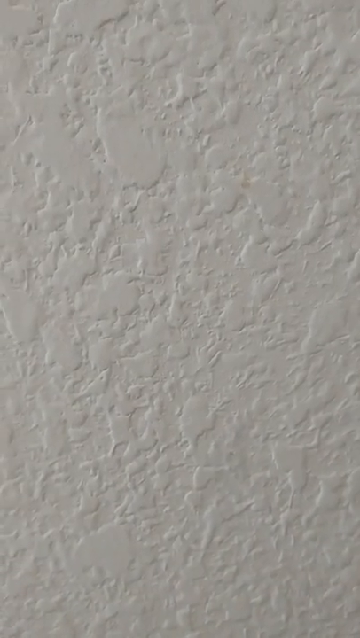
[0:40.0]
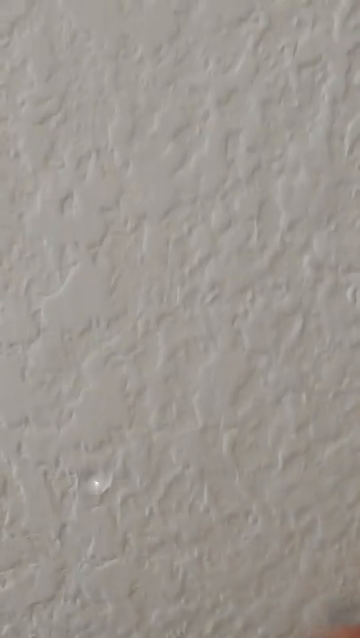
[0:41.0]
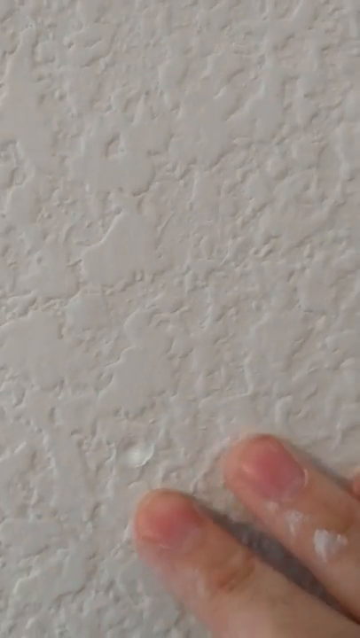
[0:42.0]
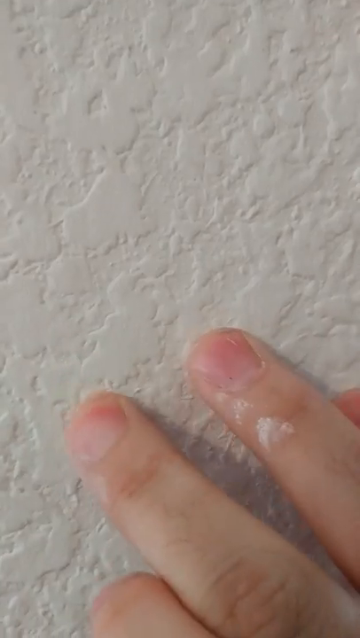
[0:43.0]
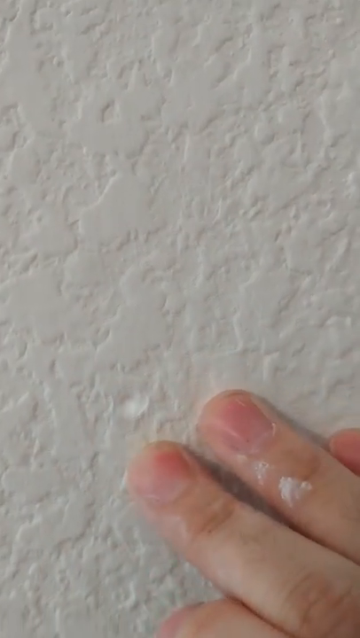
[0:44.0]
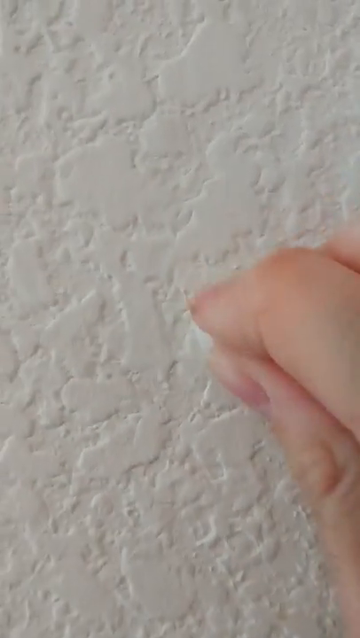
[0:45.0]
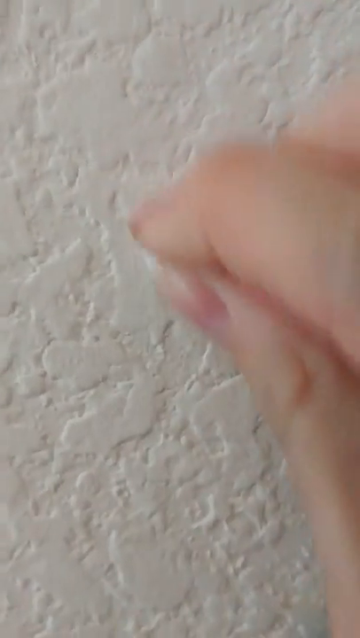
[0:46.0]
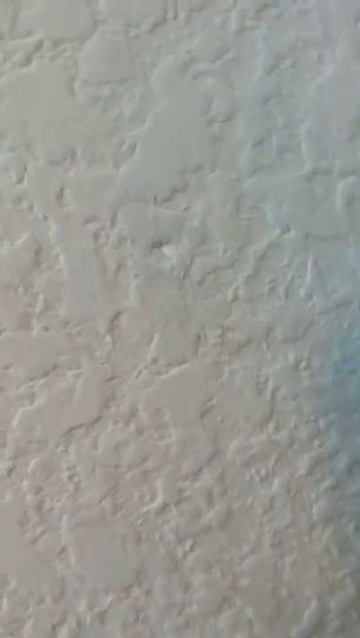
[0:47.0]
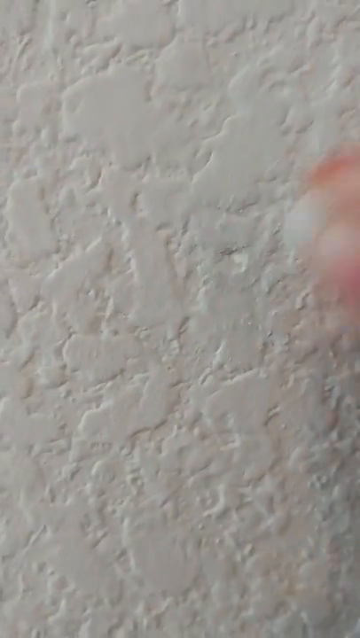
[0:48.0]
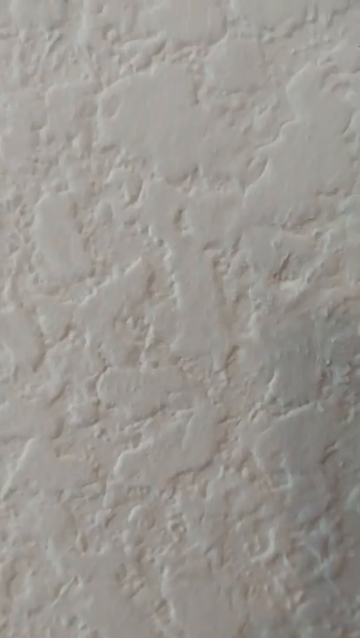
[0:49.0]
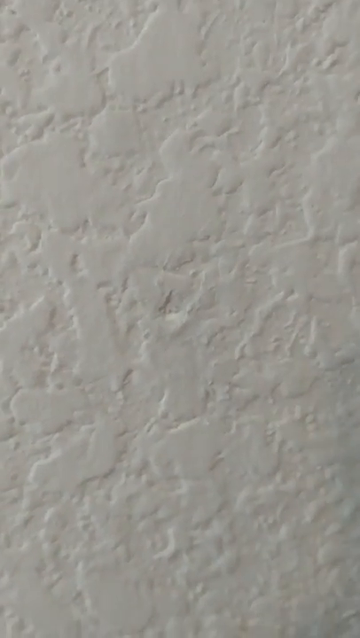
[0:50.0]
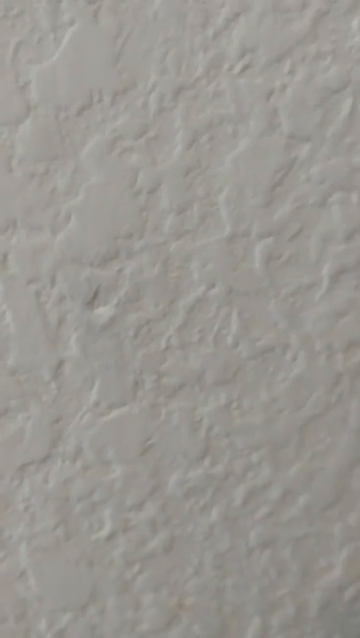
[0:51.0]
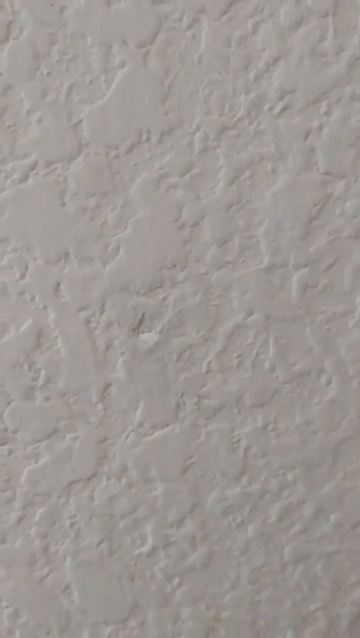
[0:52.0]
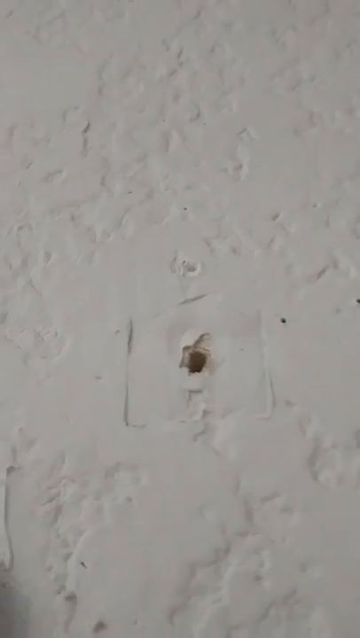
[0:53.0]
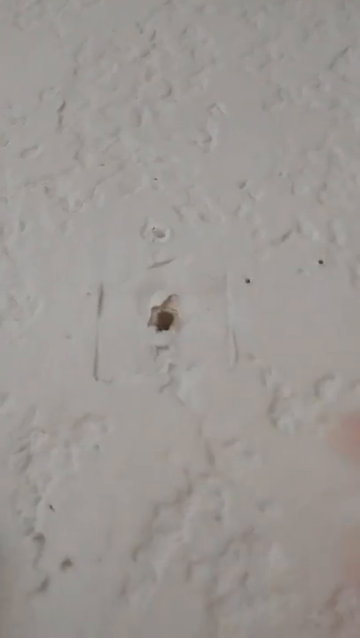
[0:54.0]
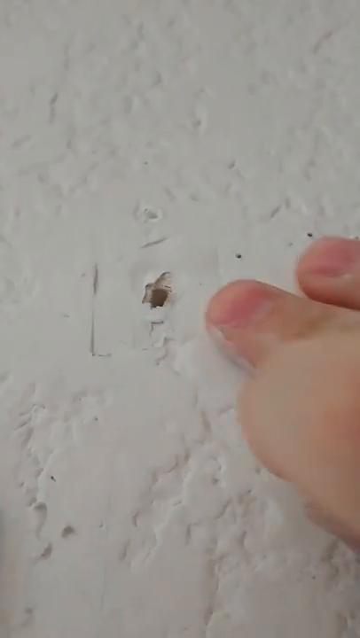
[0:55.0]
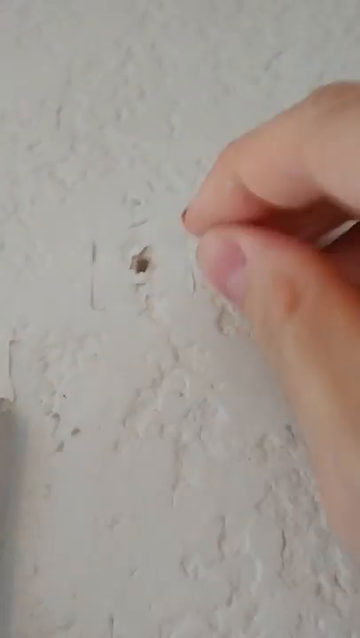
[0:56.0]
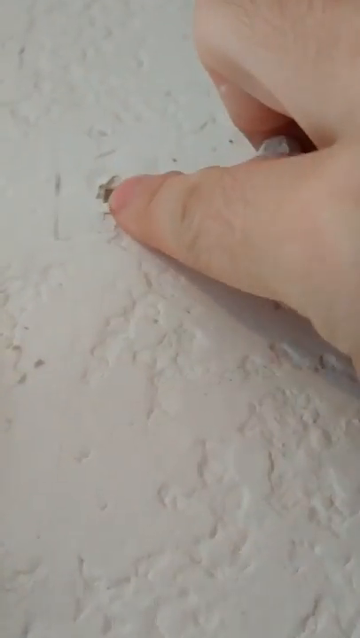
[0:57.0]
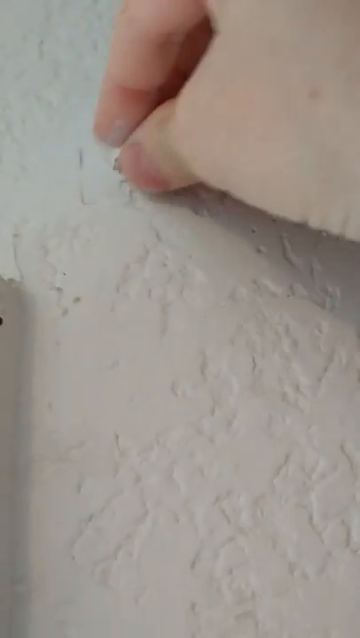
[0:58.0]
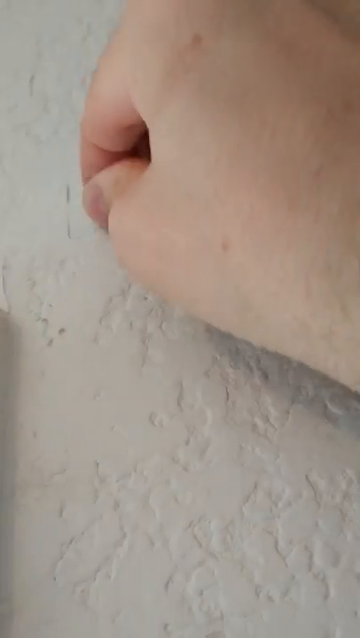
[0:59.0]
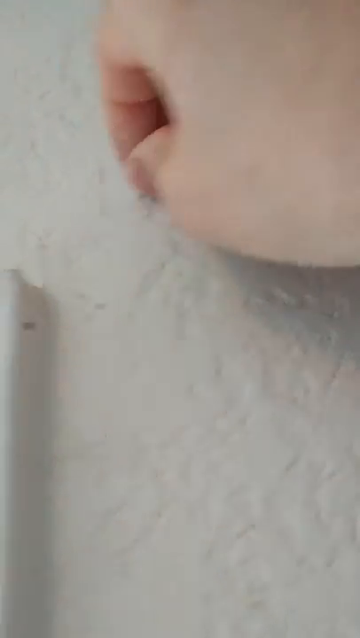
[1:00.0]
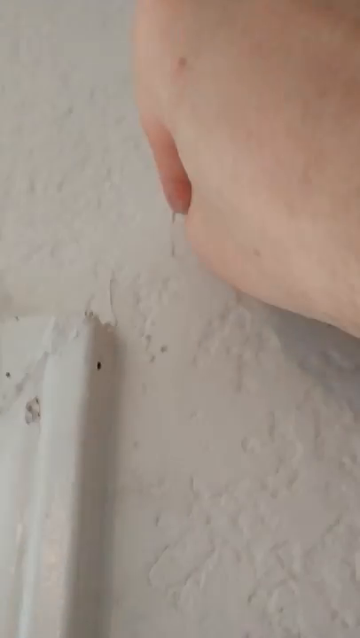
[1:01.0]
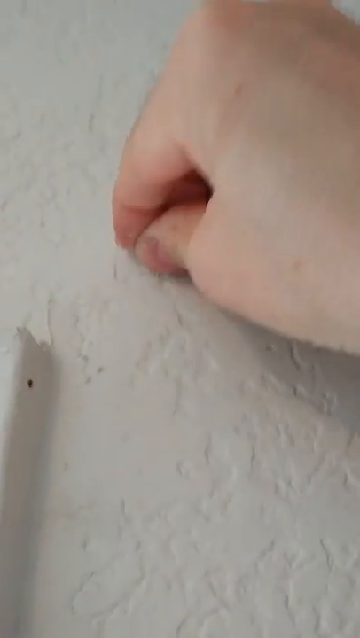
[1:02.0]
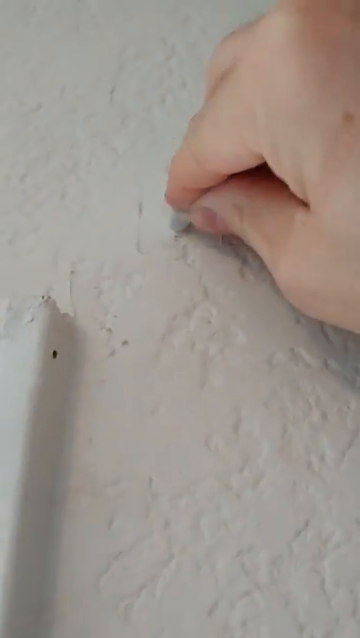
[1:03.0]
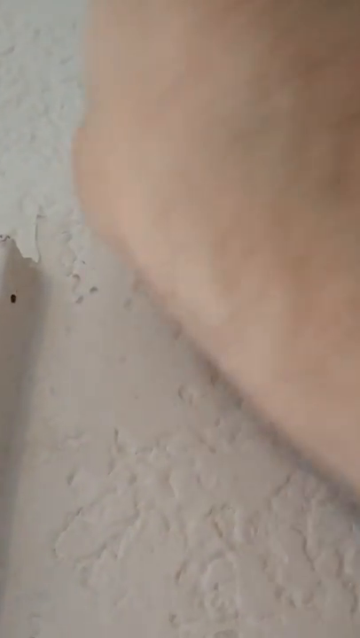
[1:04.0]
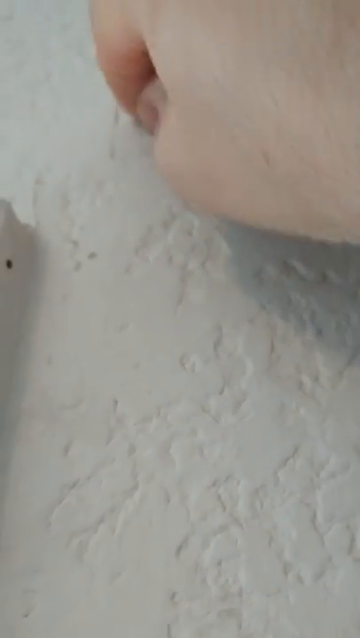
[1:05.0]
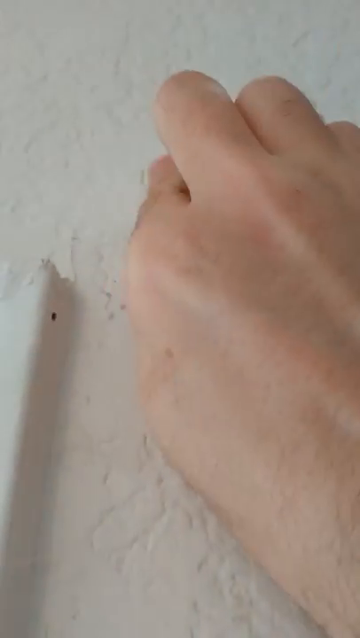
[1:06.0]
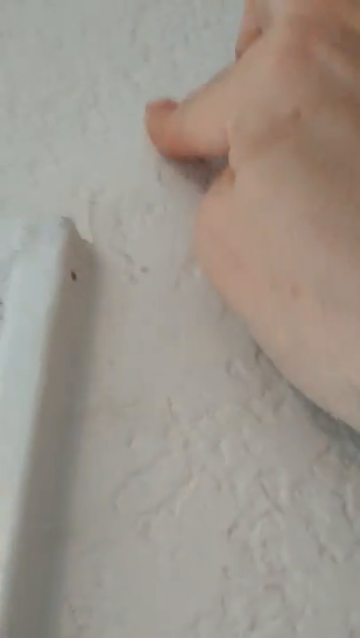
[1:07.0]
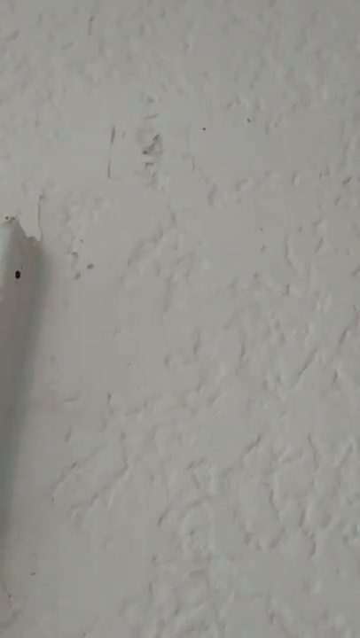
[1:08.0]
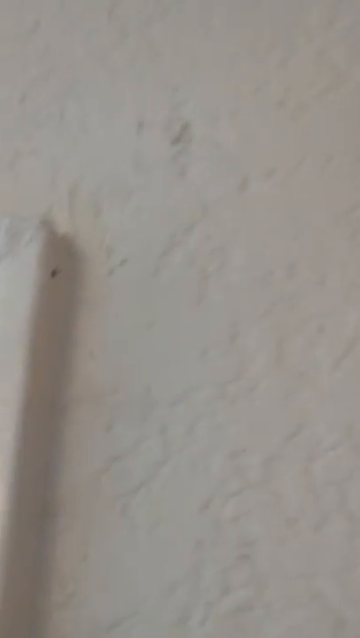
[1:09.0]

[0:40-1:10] A close-up shows what looks to be a stucco wall with no holes and no dirty spots. The camera pans up a little to a small dimple, which is worked with chalk the same way as the other holes, going back and forth. The video then switches to a more serious spot: a hole in the wall surrounded by a square pattern, where something with a bracket was screwed in a little too hard and pulled in, making a dent in the soft stucco or sheetrock board.